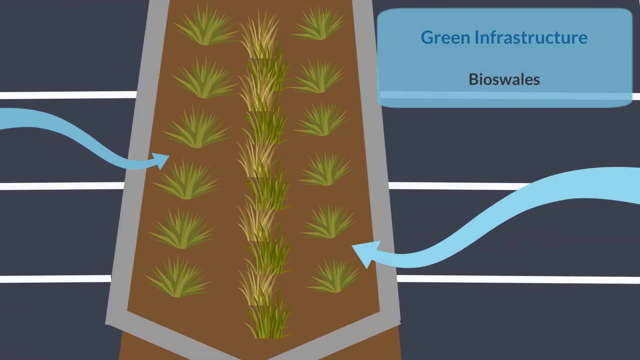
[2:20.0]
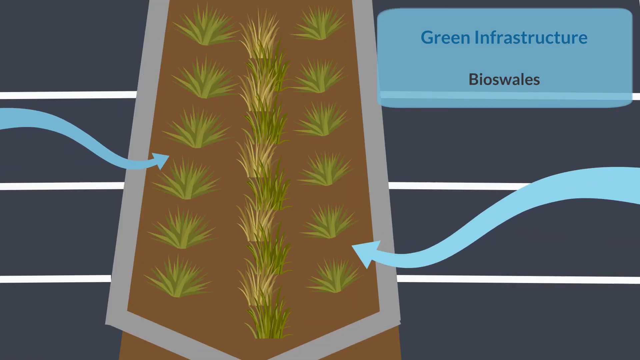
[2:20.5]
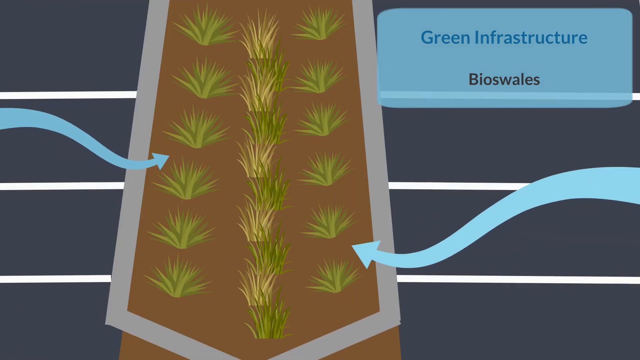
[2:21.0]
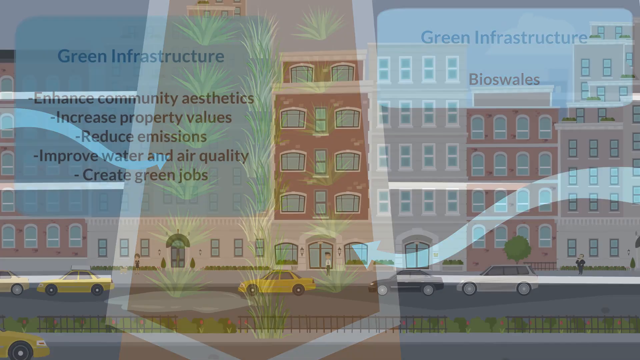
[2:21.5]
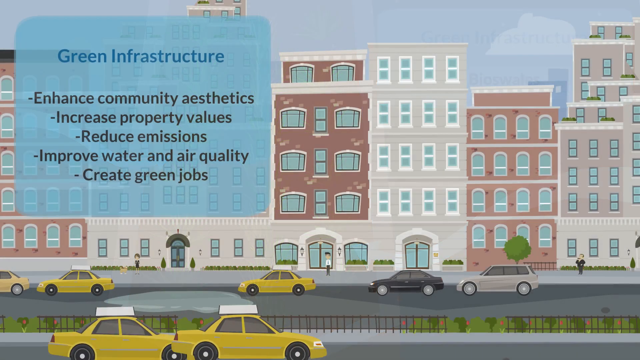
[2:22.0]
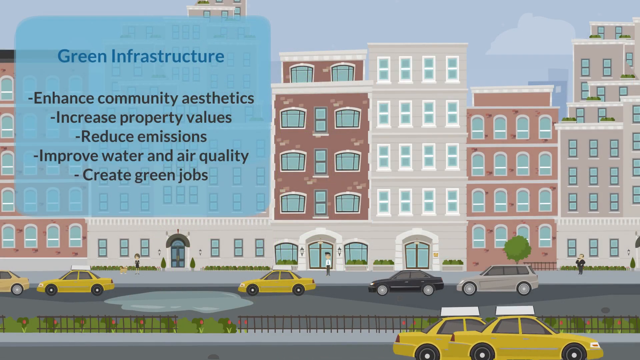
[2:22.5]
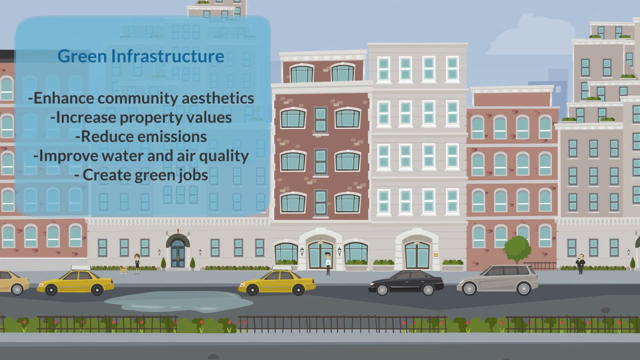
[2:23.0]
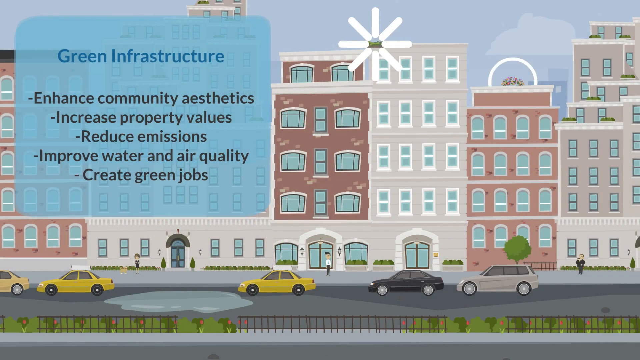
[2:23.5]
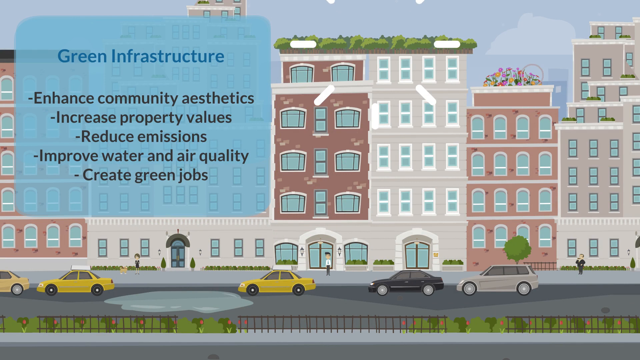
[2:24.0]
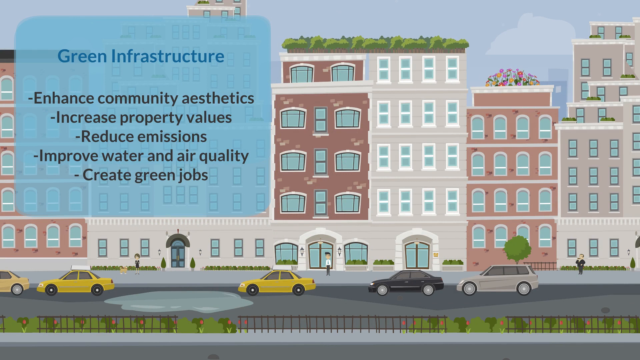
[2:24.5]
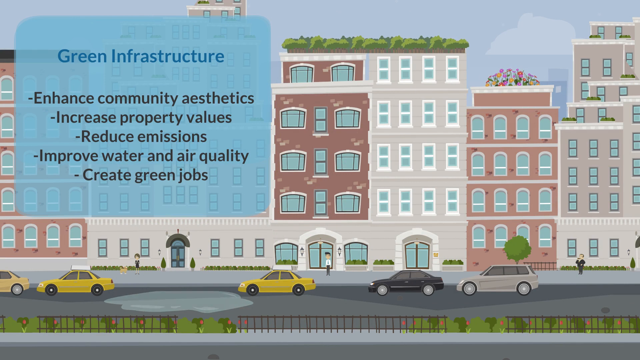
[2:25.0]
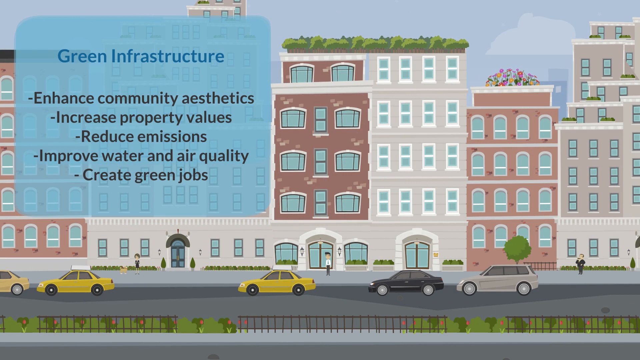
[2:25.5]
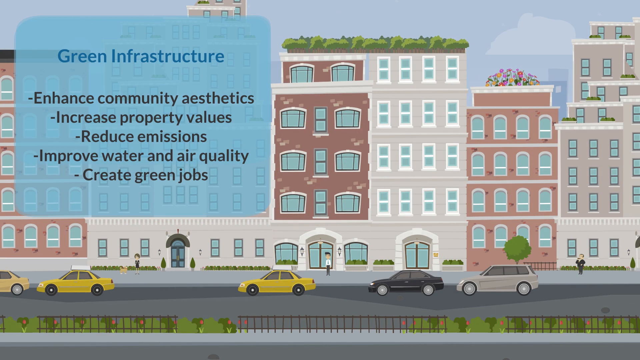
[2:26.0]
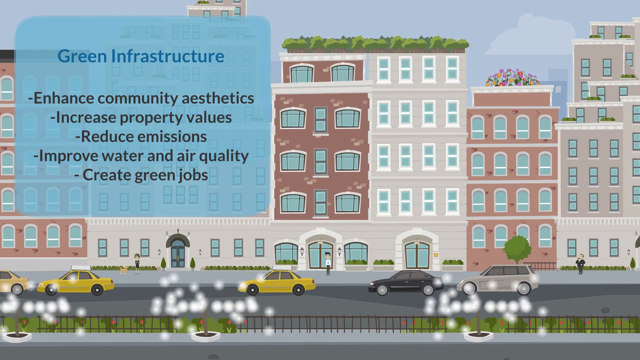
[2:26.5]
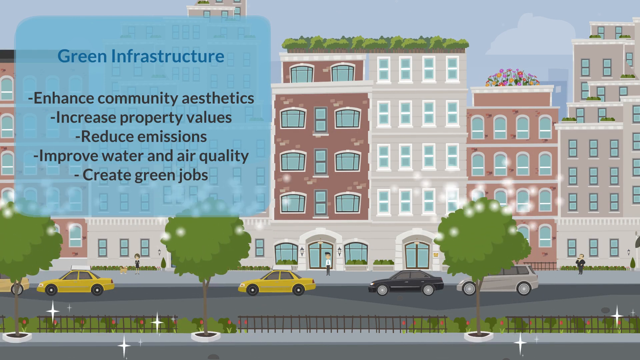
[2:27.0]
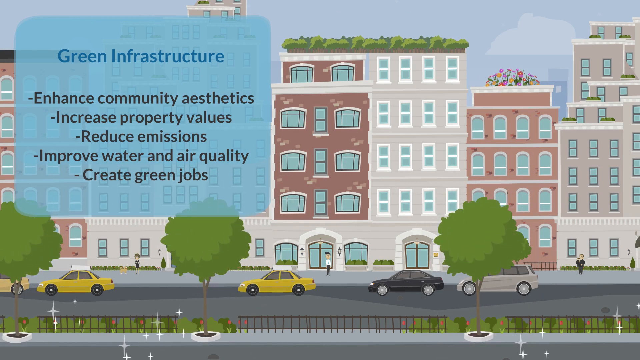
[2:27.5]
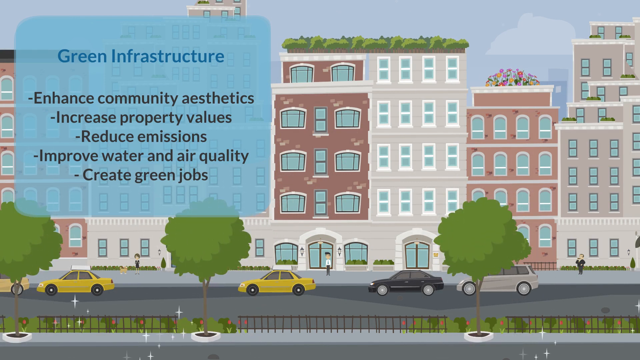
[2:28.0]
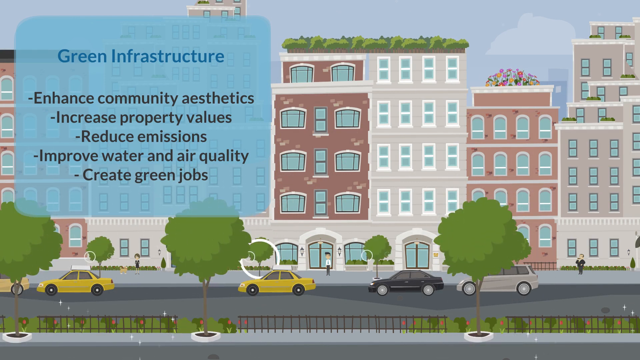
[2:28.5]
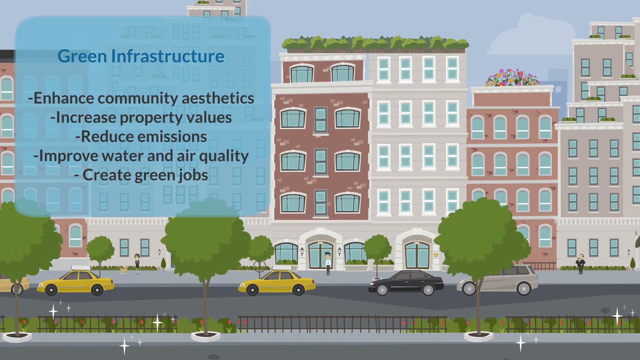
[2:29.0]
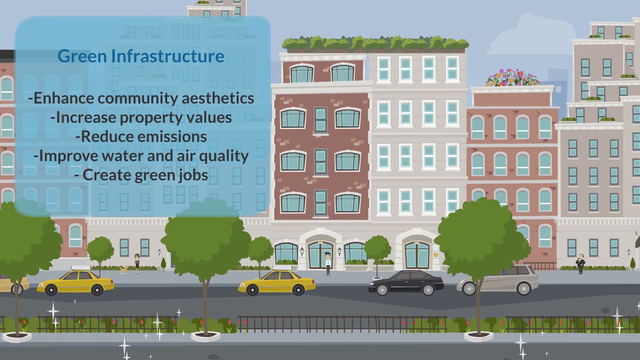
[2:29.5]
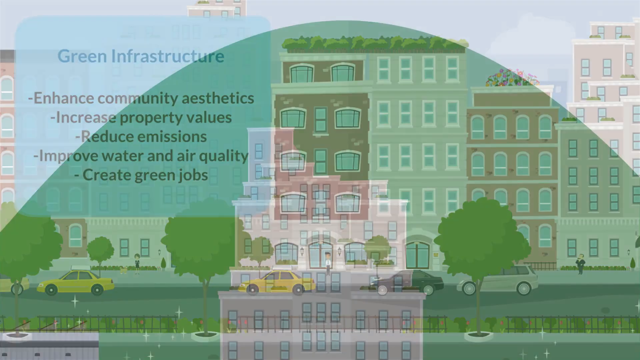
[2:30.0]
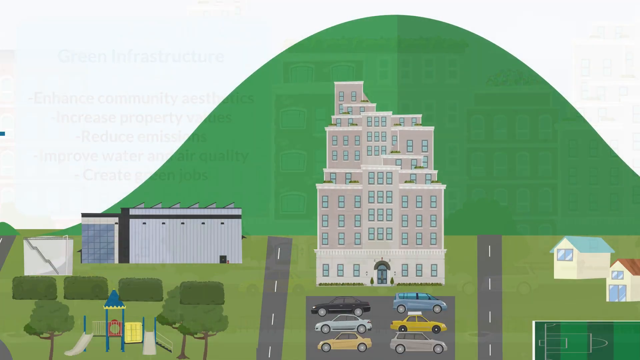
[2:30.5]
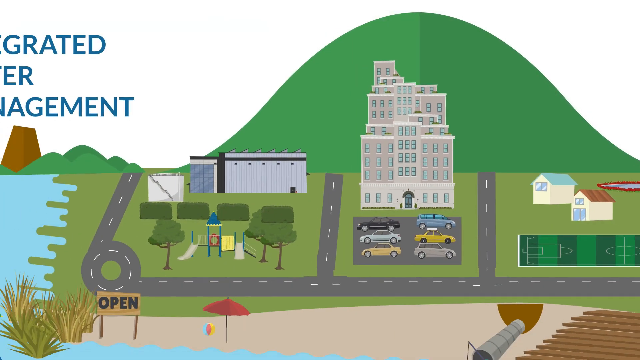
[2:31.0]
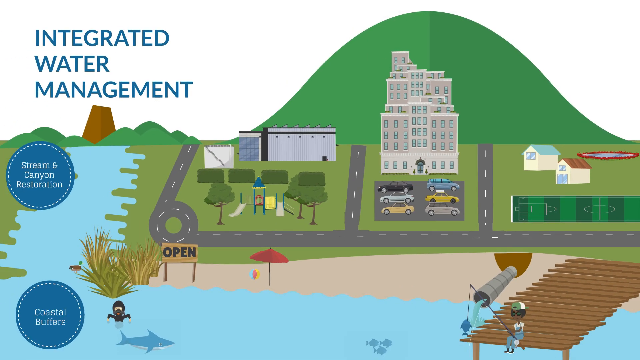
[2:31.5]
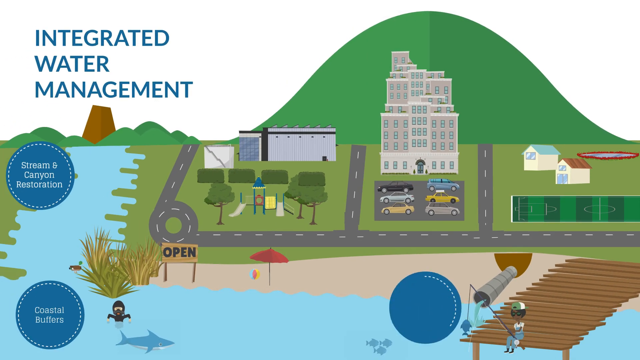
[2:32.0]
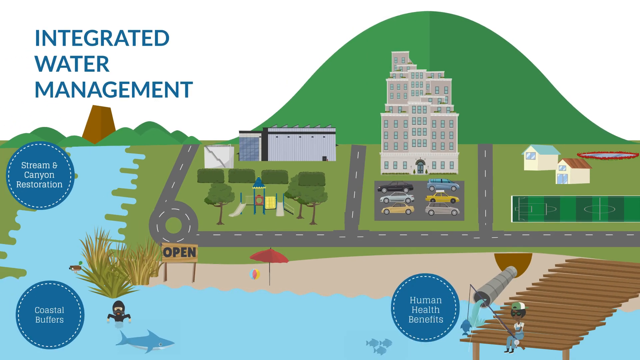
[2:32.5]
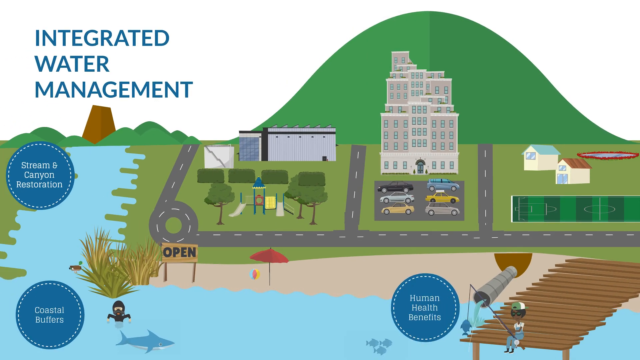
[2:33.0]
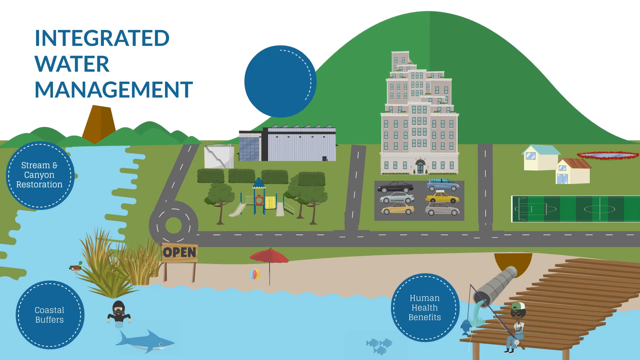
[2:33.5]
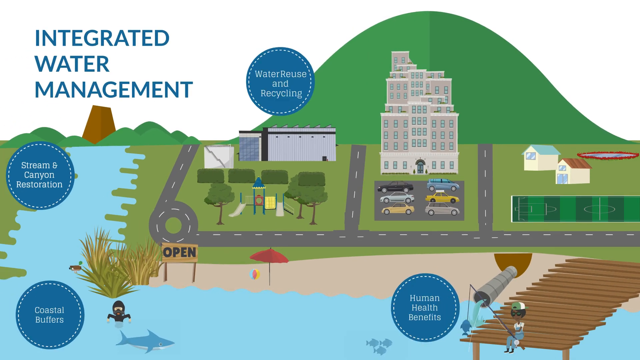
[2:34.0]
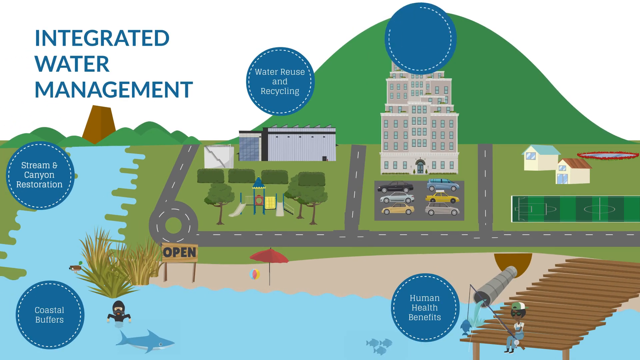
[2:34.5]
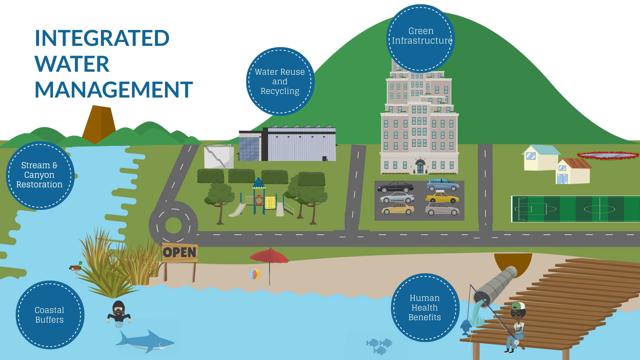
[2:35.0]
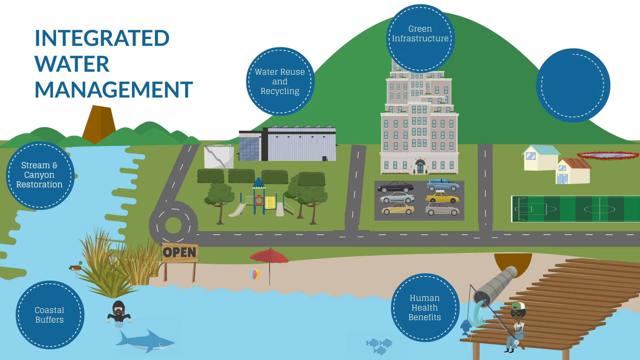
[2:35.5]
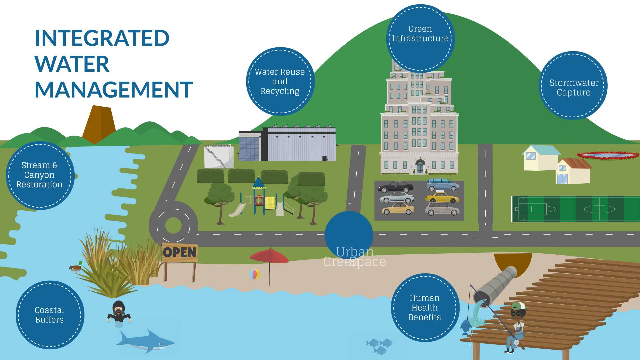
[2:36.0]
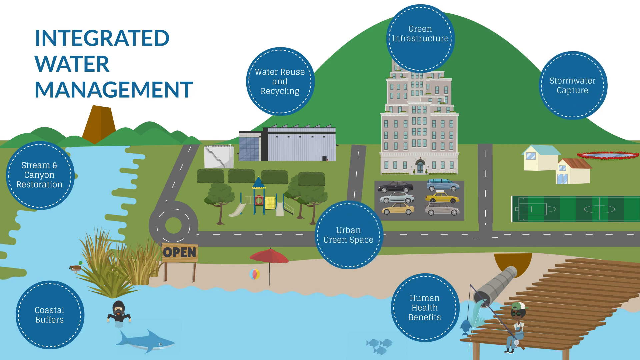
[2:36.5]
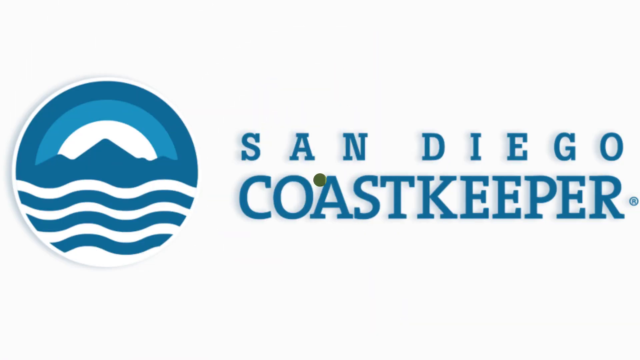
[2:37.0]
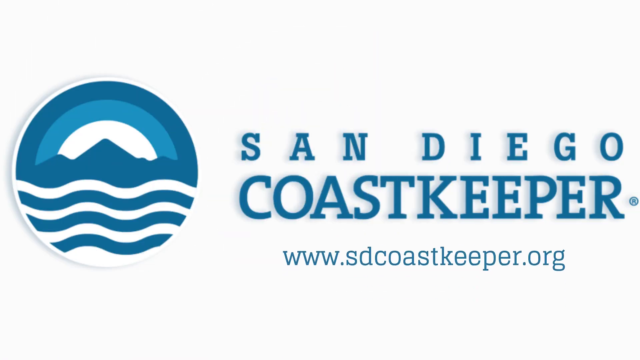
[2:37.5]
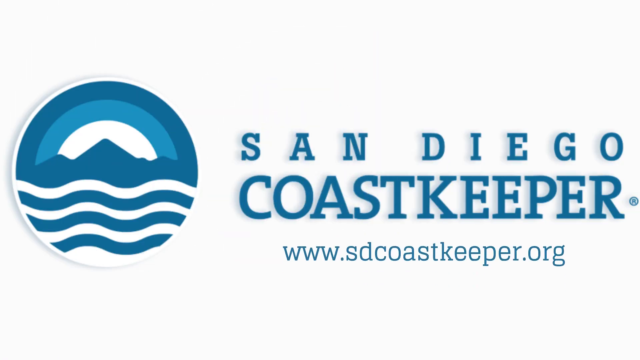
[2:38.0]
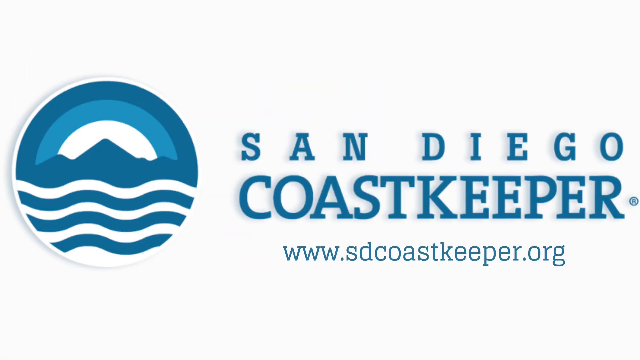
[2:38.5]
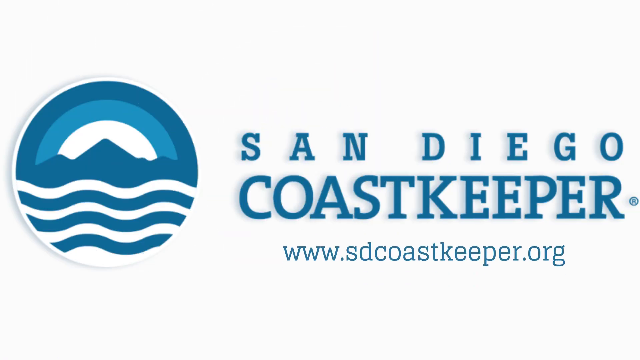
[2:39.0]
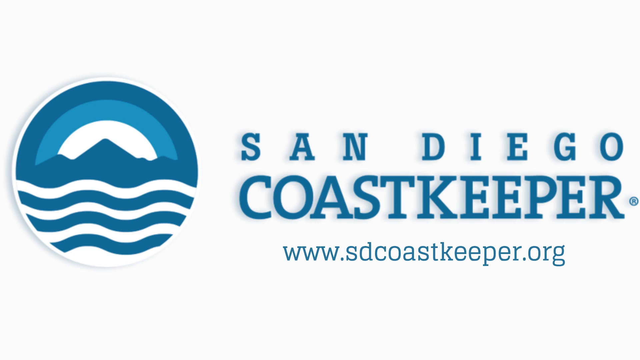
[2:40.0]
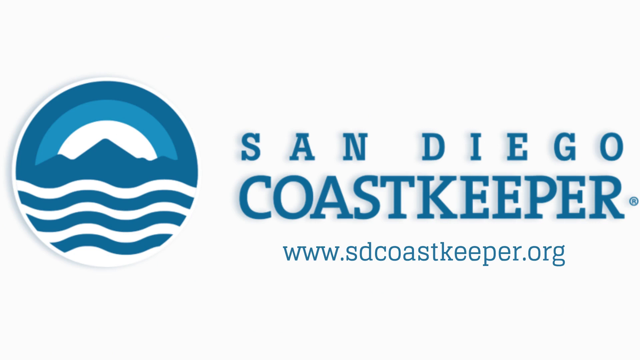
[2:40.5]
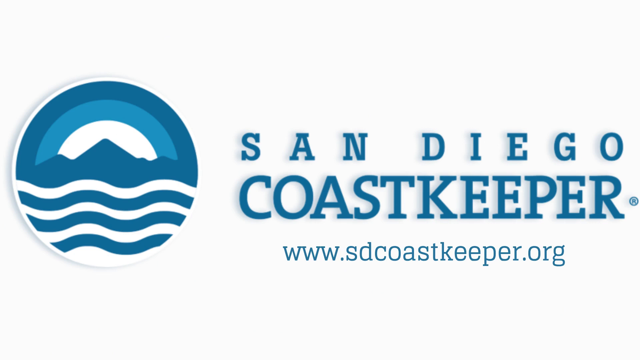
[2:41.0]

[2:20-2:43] "Green infrastructure" appears with the text "Enhance community aesthetics, increasing property values, reduce emissions, improve water and air quality, create green jobs." The scene opens on what looks to be a downtown street with what looks to be apartment buildings and a city street. Yellow taxi cabs and other vehicles are on the side of the street, and there may possibly be doormen standing in front of some of the buildings. Some of the rooftops have flowers and a lot of trees. The scene cuts to "green infrastructure" and "bioswales," with people driving by on the street and more and more trees being put out. Finally, text reads "San Diego Coast Keeper" with information and "www.sdcoastkeeper.org."